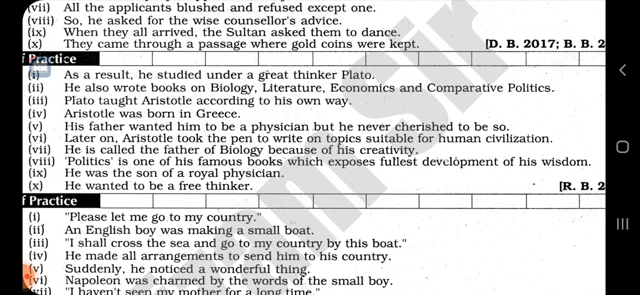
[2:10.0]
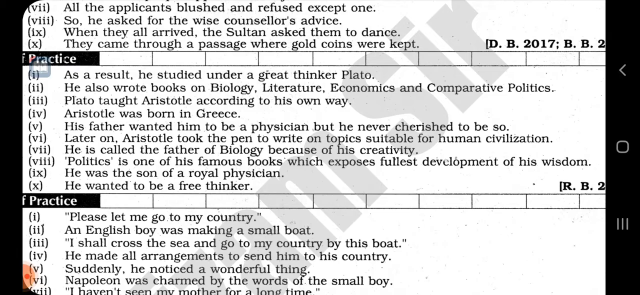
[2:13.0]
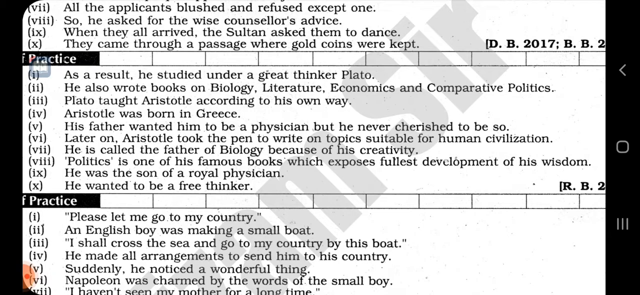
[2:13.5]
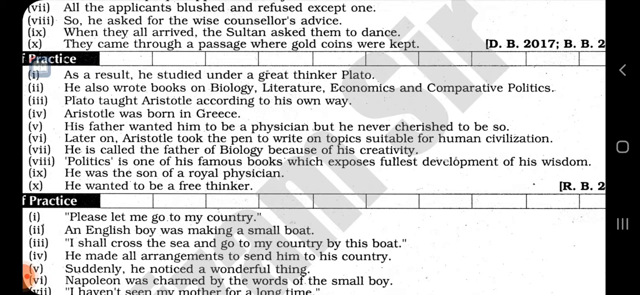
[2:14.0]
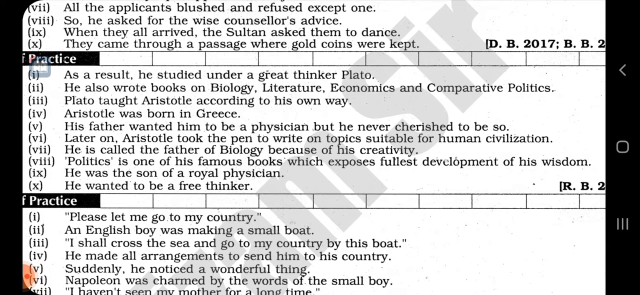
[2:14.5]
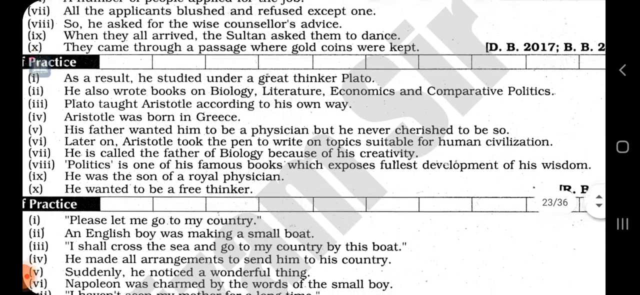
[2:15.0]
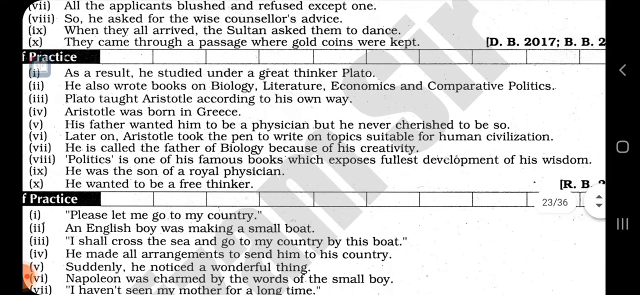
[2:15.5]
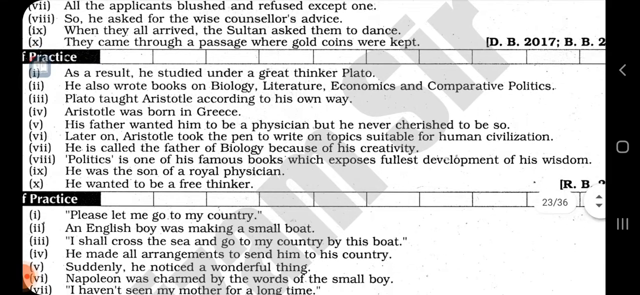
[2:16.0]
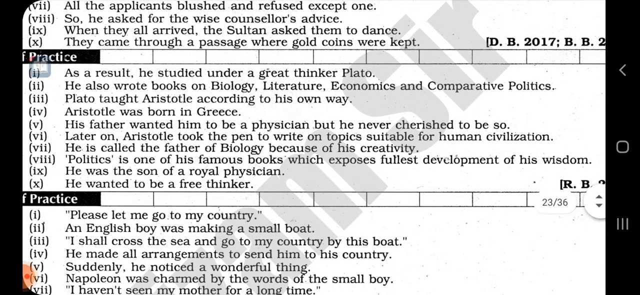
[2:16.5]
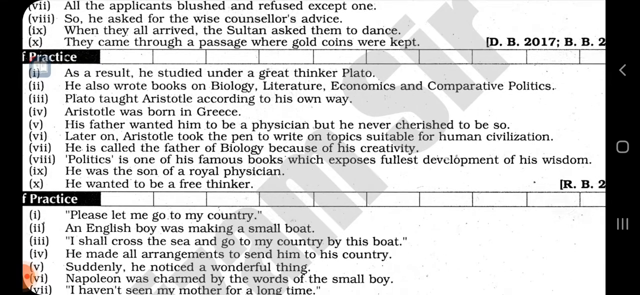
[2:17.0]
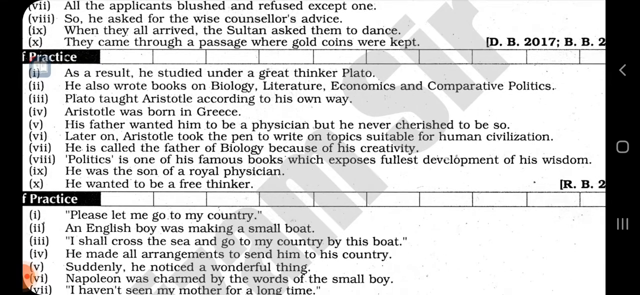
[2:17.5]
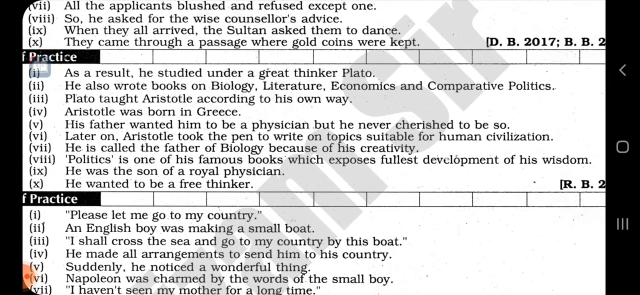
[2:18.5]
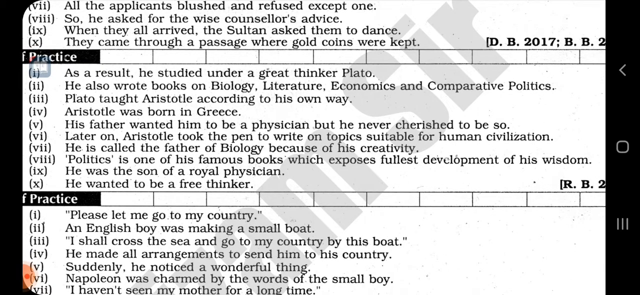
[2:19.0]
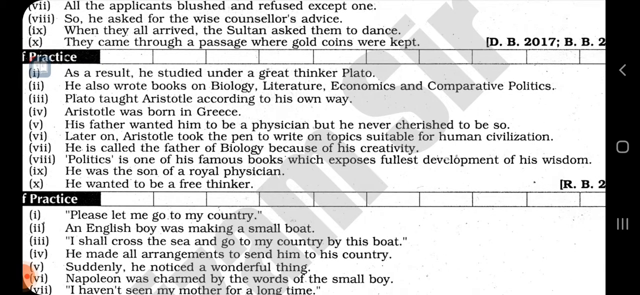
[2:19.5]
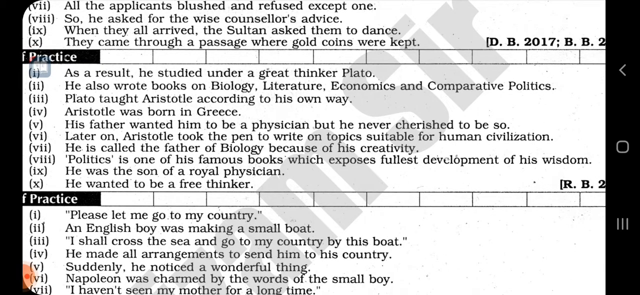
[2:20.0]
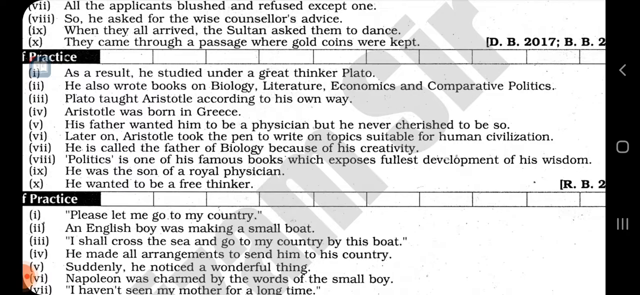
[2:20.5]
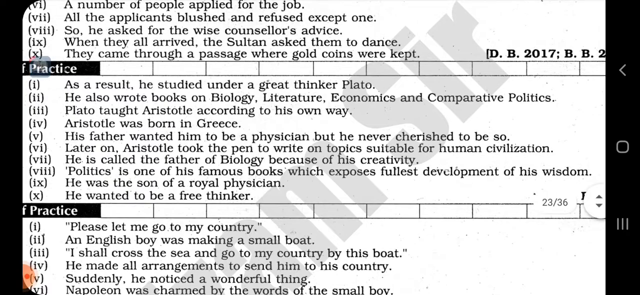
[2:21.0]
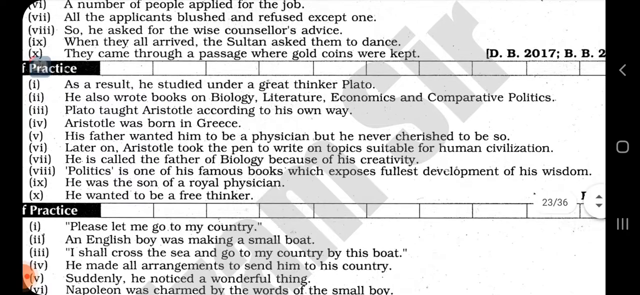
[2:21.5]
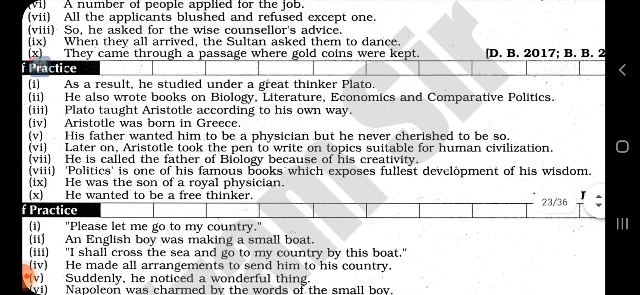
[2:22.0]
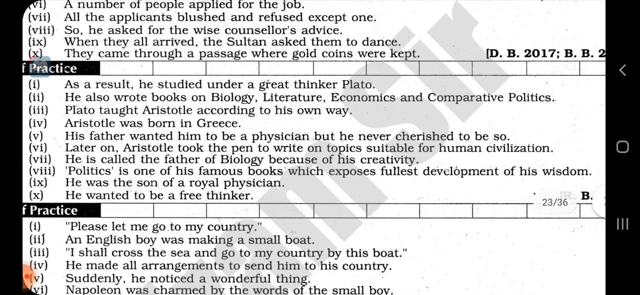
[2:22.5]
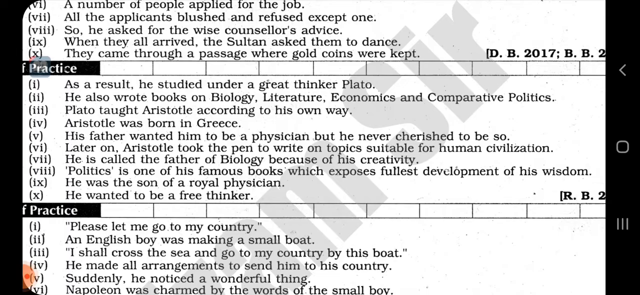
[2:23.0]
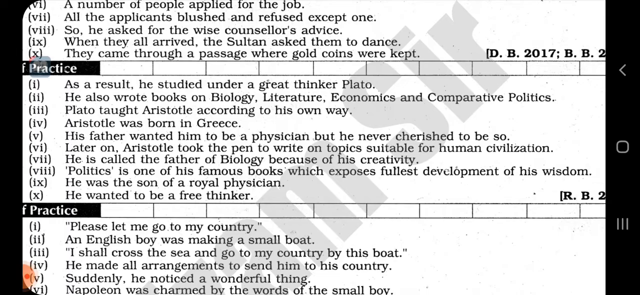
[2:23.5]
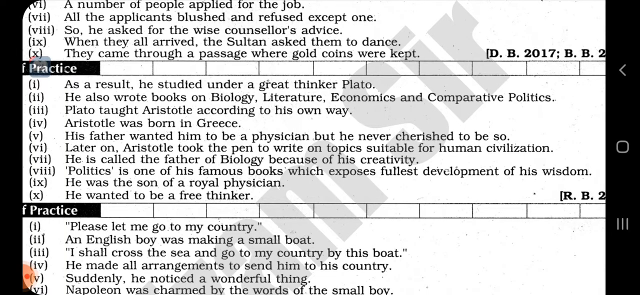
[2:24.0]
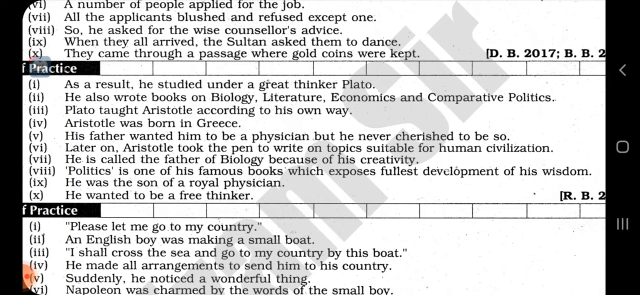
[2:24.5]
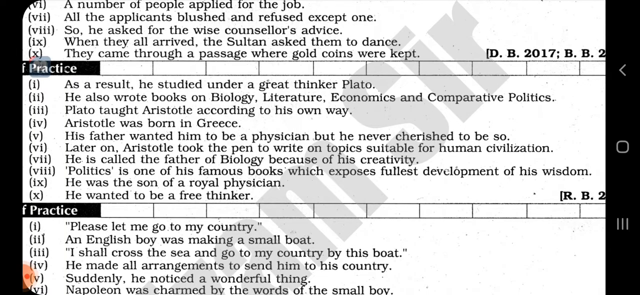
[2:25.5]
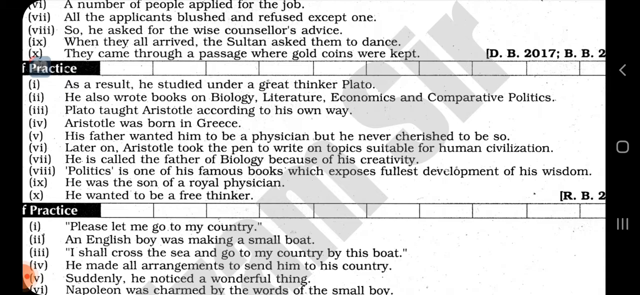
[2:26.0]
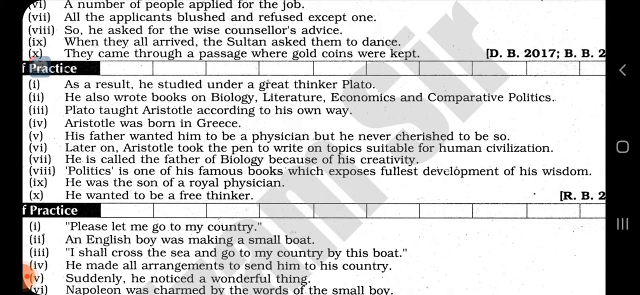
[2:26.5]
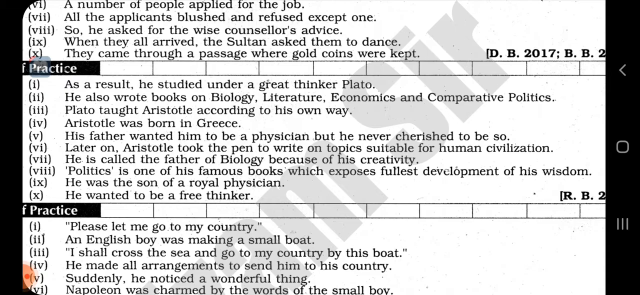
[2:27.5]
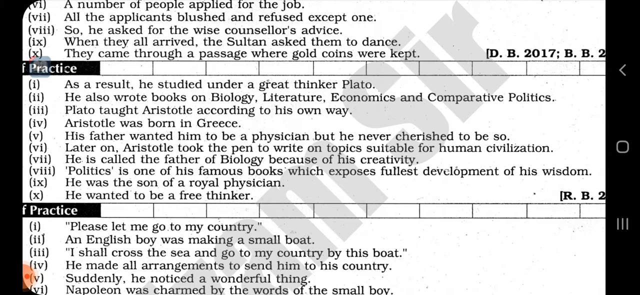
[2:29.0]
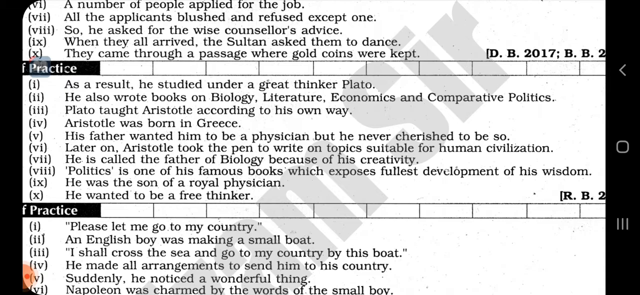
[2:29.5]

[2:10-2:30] The setting remains unchanged. The scroll bar again shows "23 out of 36" as the screen is adjusted, with the focus kept on the middle passage. The passage before it refers to a type of job, with a man asking for a counselor's advice, the Sultan asking them to dance, and the man having come through a passage where gold coins were kept; its reference reads "DB 2017" and "BB" with the rest of the year cut off. The banner on the right looks tilted and has a left-facing arrow that could also be a less-than sign, a circle, and a symbol of three stacked lines. The screen is adjusted at least three times to focus on and optimize the view of the middle passage.